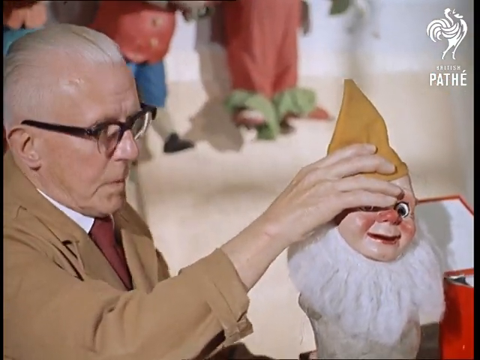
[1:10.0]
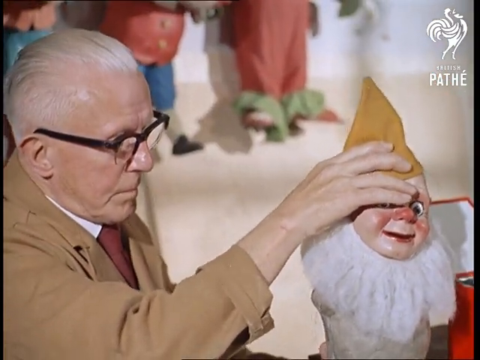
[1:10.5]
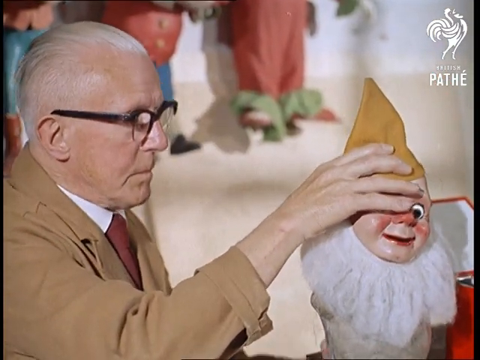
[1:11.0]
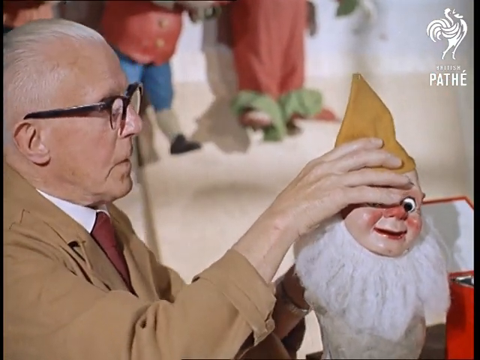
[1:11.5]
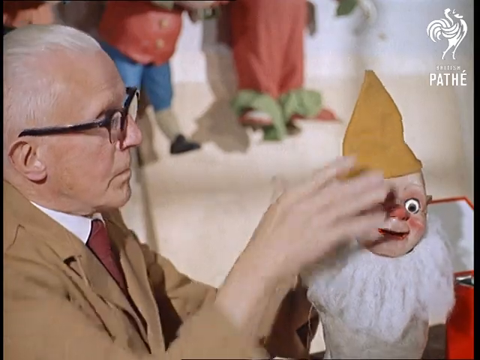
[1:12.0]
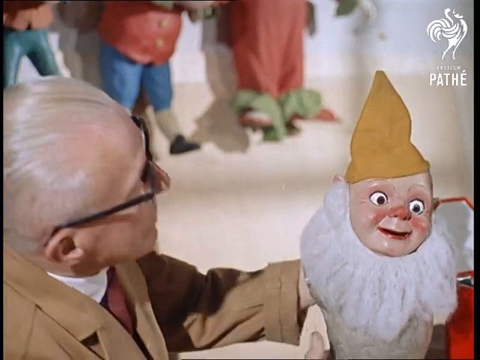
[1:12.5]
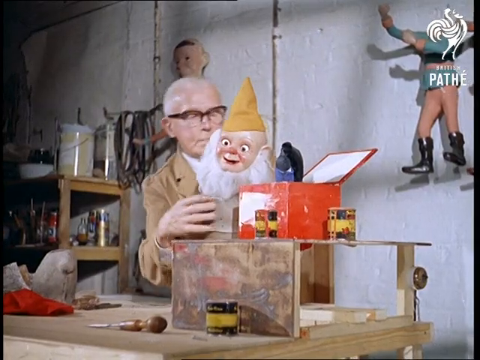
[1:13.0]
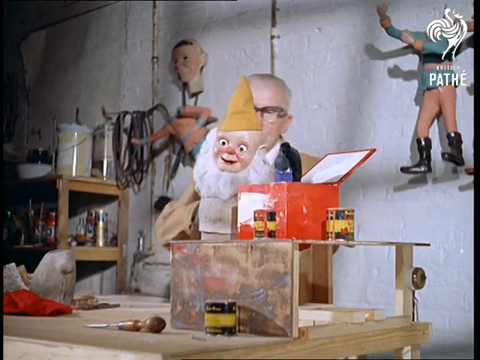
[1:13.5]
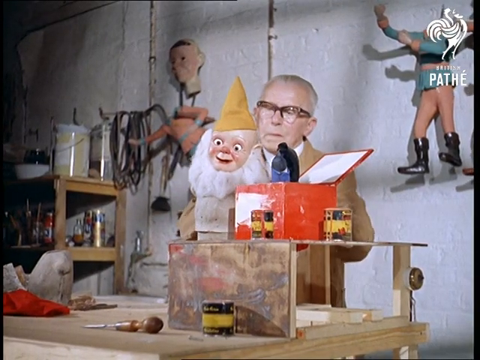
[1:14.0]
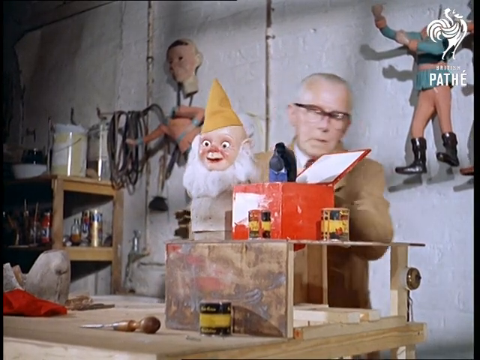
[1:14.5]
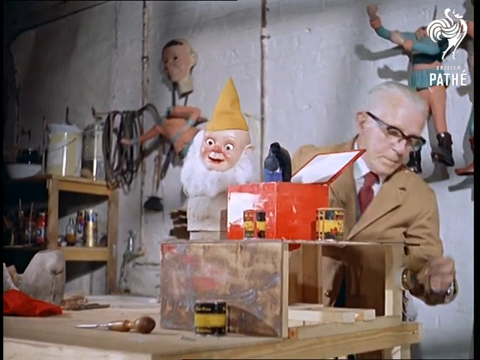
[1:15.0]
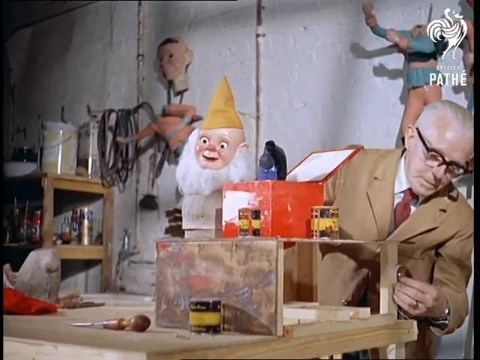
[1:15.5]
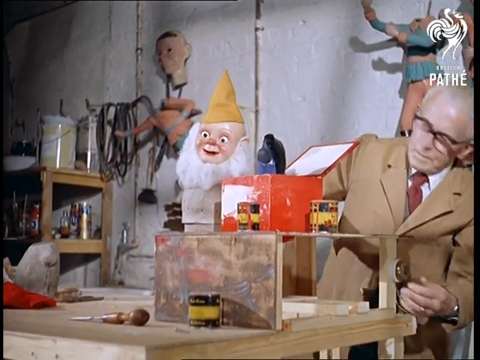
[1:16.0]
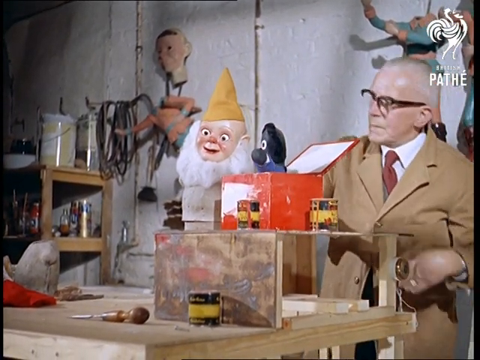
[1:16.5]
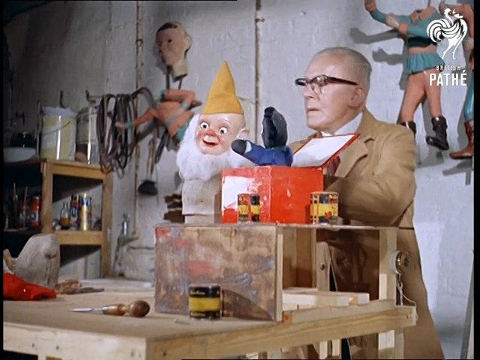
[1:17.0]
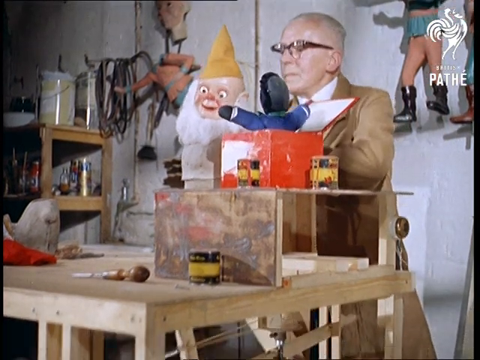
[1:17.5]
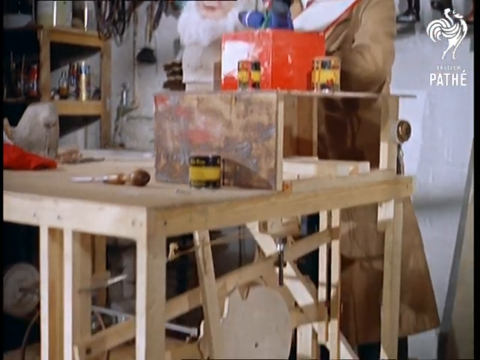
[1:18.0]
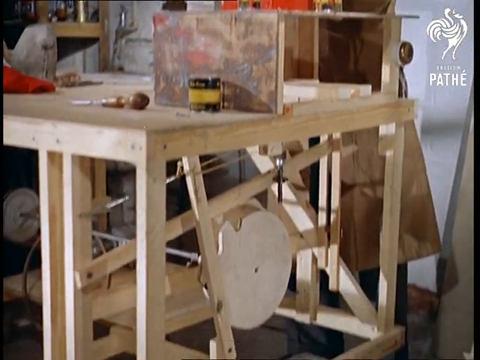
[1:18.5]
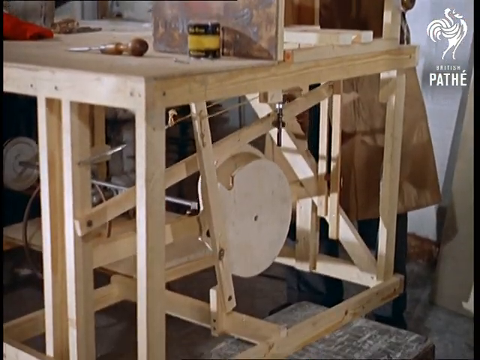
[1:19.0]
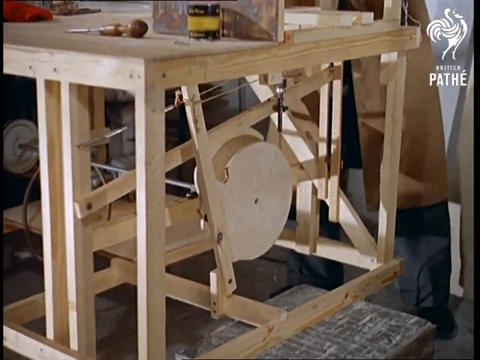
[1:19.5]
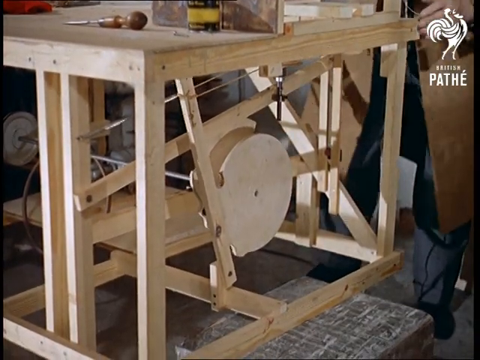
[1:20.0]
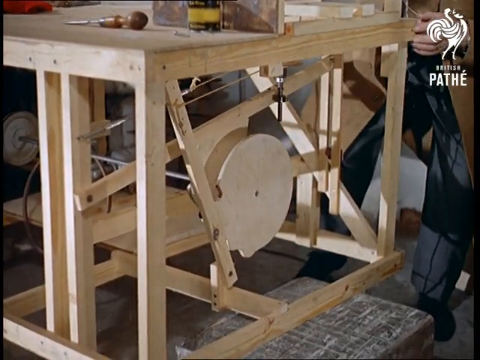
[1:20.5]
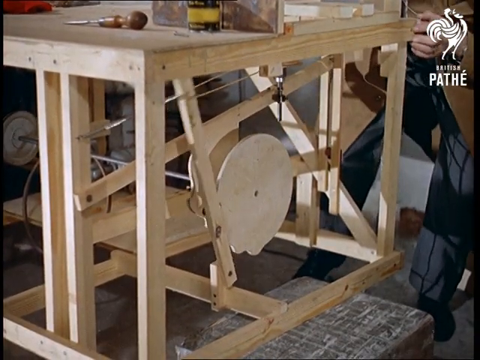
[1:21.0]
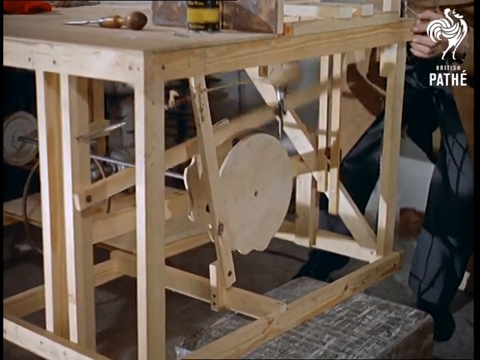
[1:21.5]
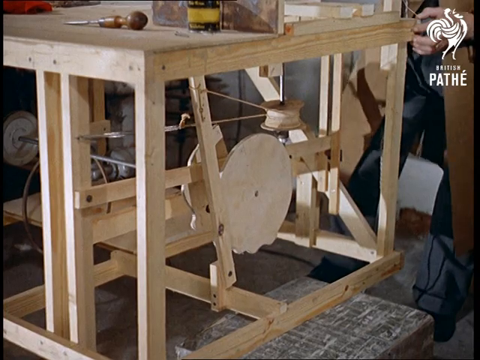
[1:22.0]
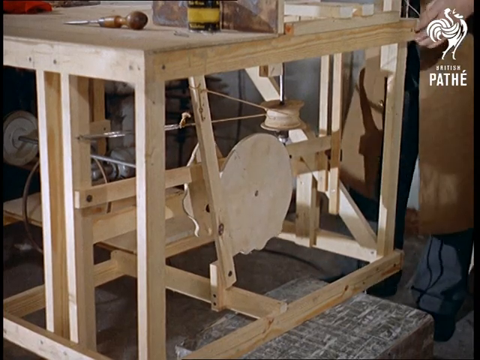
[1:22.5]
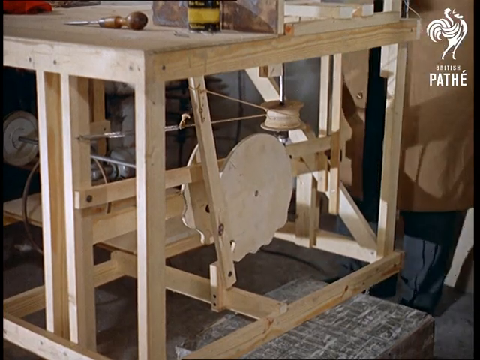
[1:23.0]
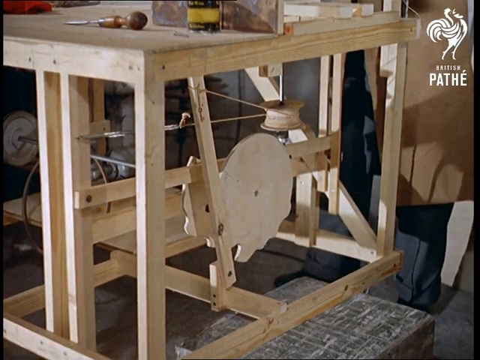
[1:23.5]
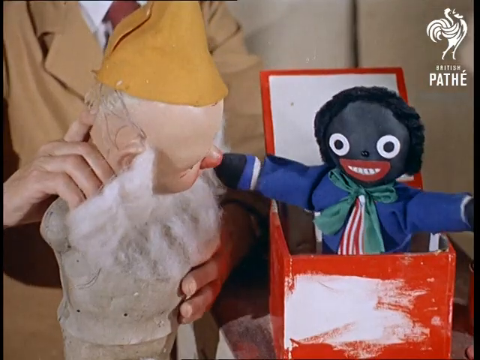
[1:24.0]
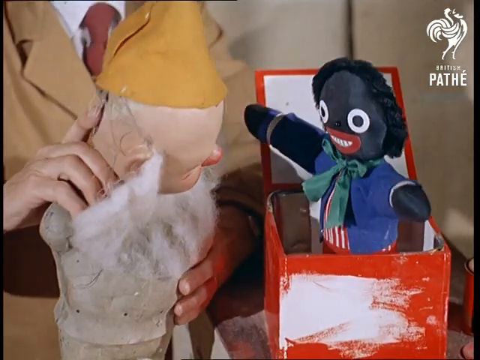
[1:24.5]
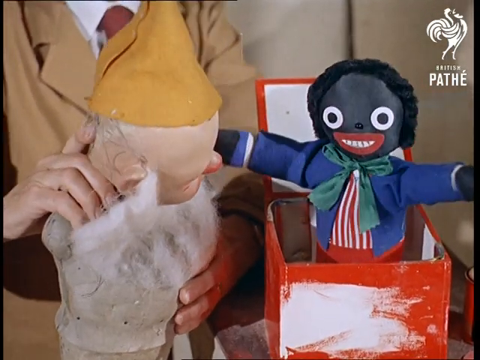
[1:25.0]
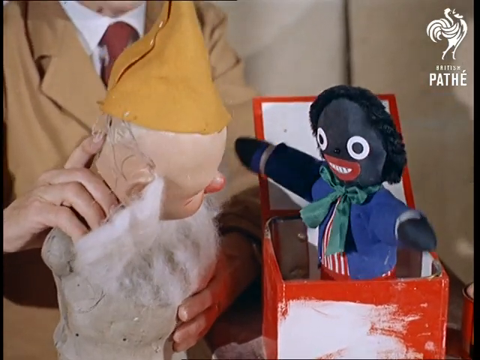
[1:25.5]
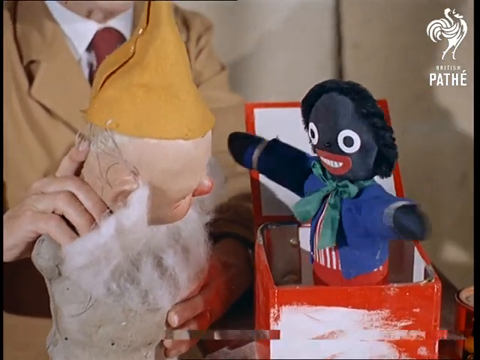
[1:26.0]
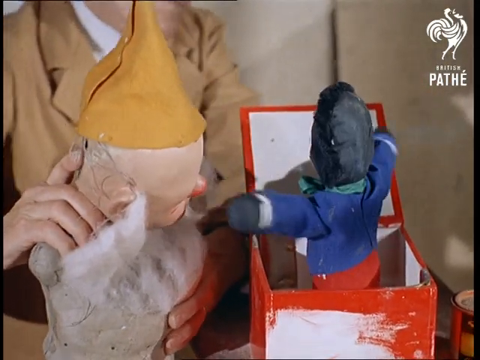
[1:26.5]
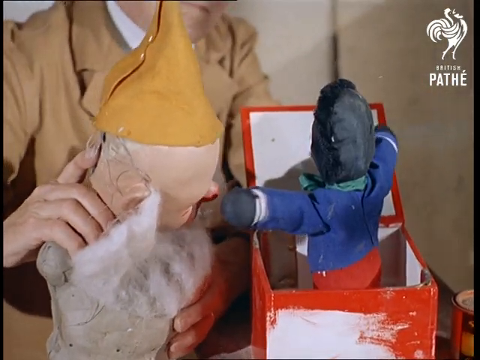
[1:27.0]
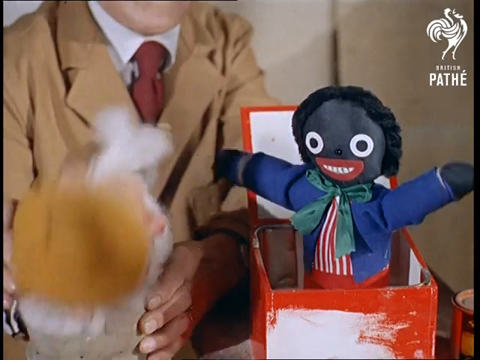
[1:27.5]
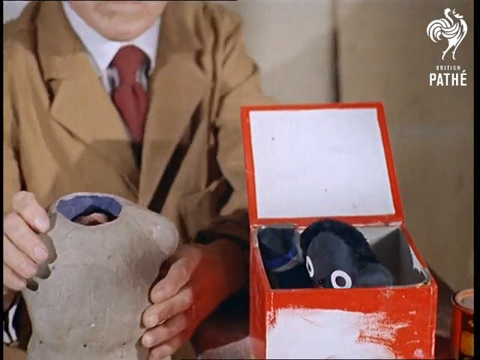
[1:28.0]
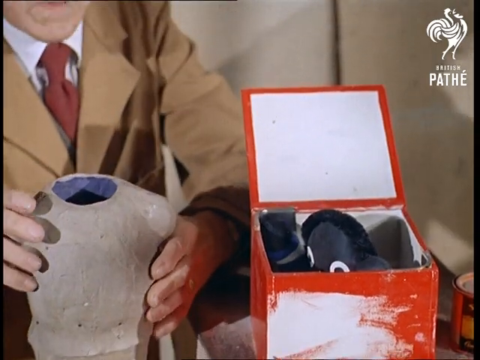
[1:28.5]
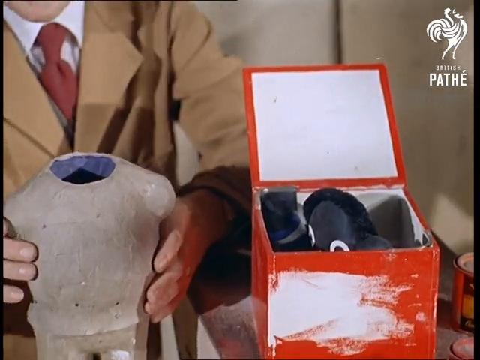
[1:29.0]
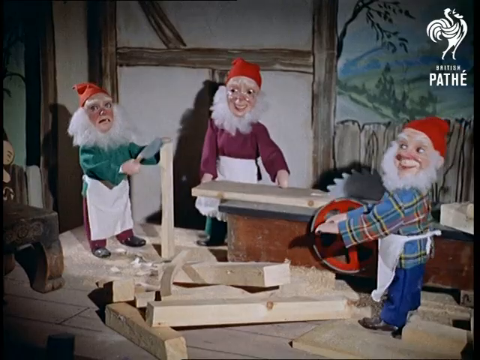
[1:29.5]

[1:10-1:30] The puppet maker continues building his puppet. Having placed the torso and head on top of the legs, he carefully adjusts it, looking from behind the puppet to make sure the torso aligns with the legs. He wiggles the head a little to make sure the whole body fits tightly and does not fall apart. He has certain tools, and the puppets are connected to a table. The table has gears under it, which start turning when the puppet master presses a button. As the gears turn, a puppet comes out of a red box and slaps the newly made puppet, and the new puppet's head falls off. Under the big table where the puppet lies, gears and levers pull strings, and the mechanism moves the black toy puppet in the red box.